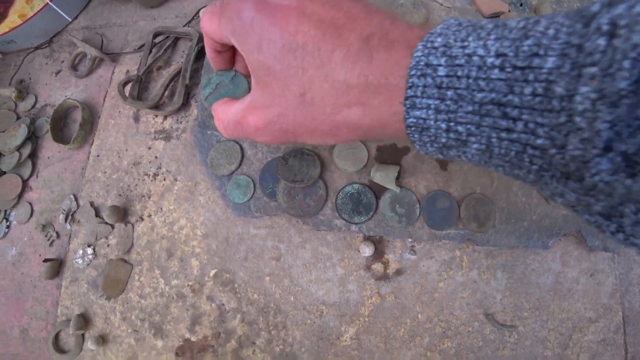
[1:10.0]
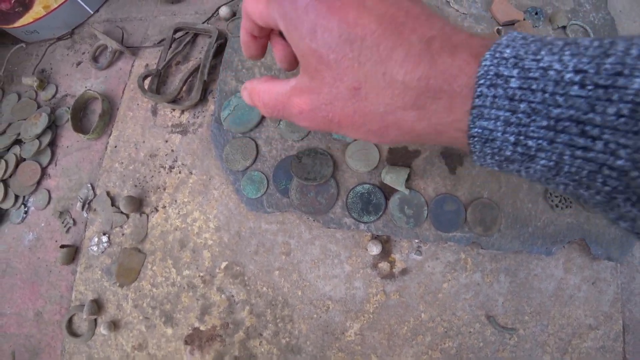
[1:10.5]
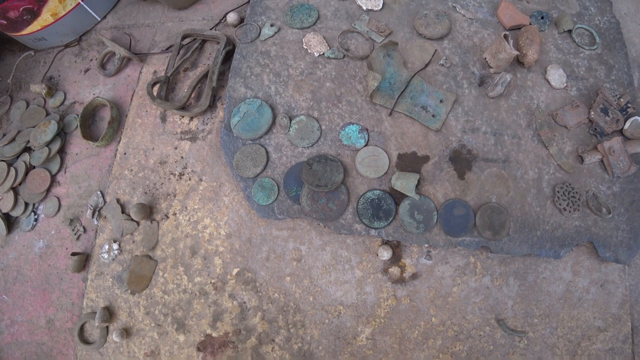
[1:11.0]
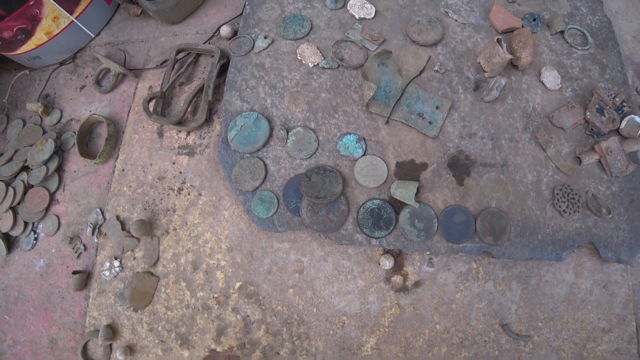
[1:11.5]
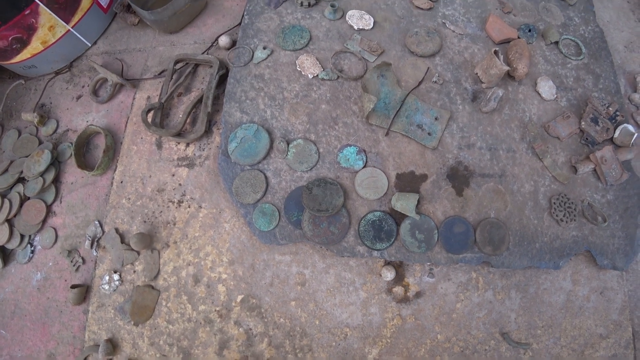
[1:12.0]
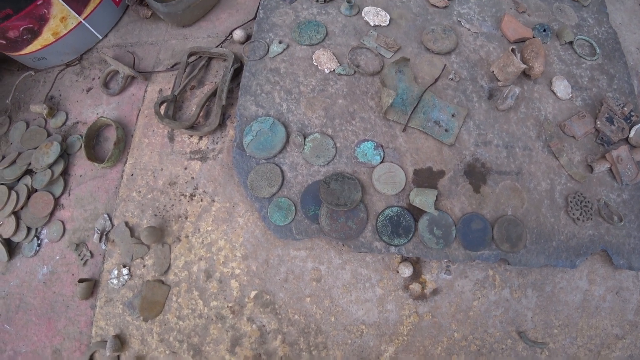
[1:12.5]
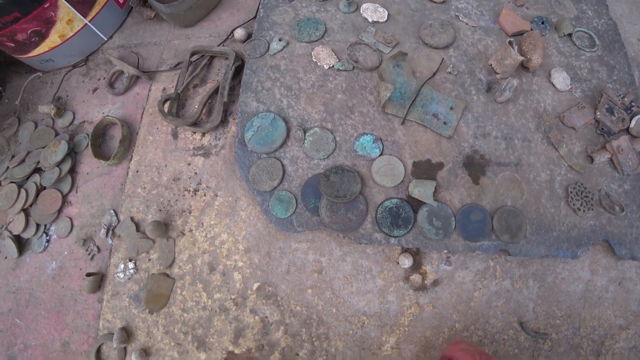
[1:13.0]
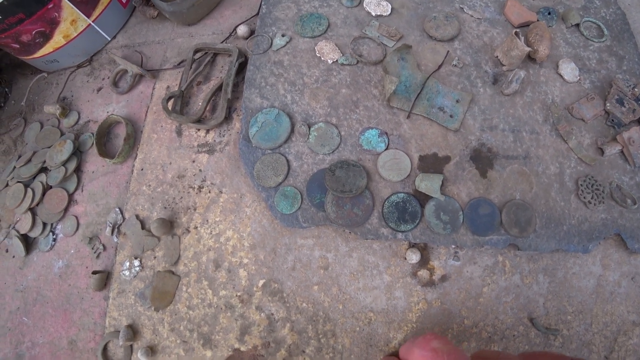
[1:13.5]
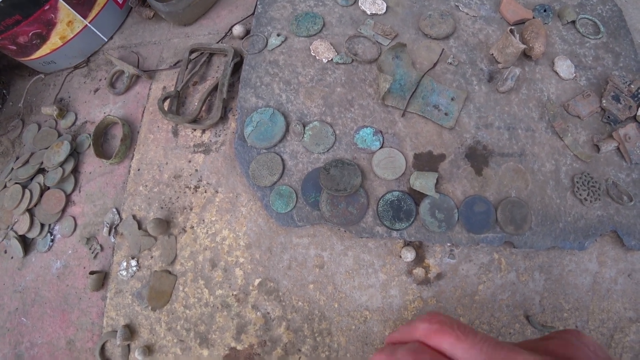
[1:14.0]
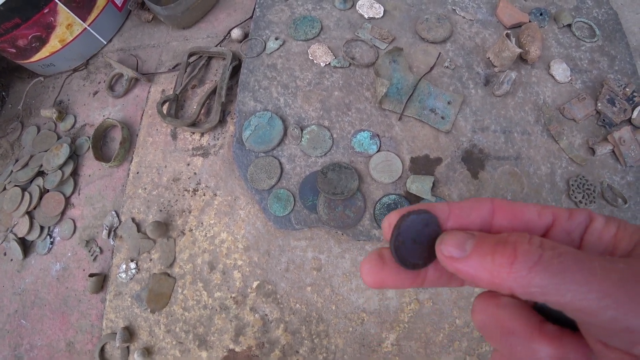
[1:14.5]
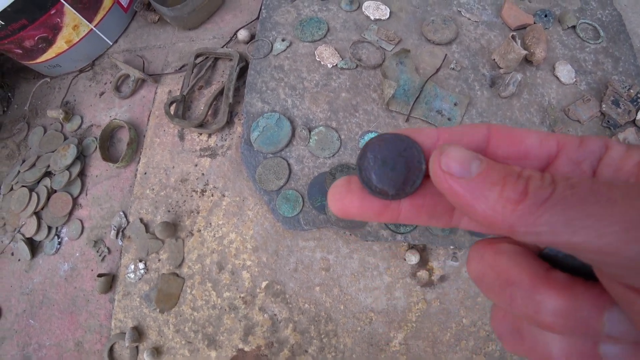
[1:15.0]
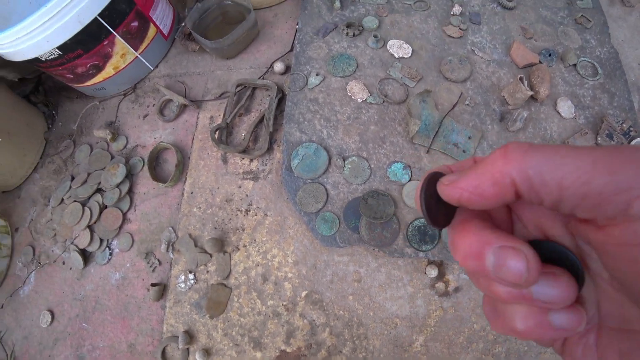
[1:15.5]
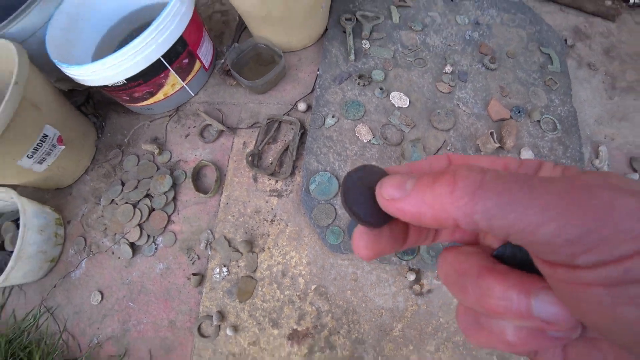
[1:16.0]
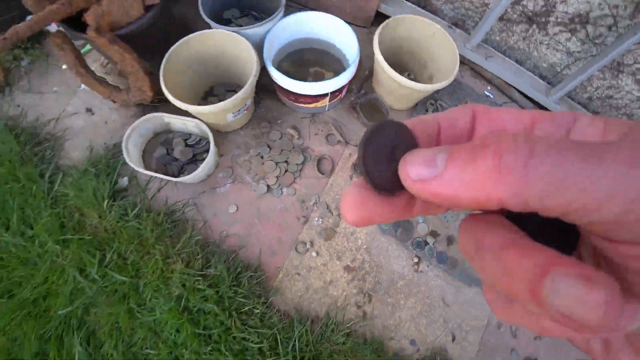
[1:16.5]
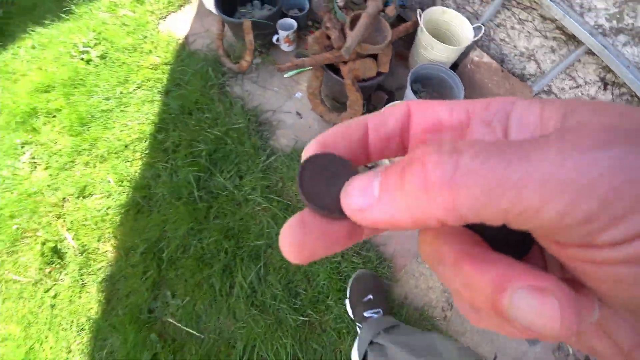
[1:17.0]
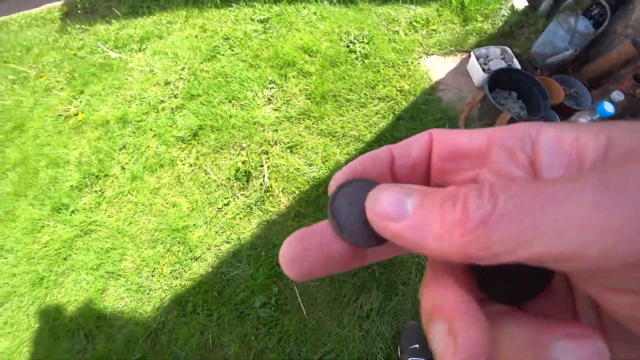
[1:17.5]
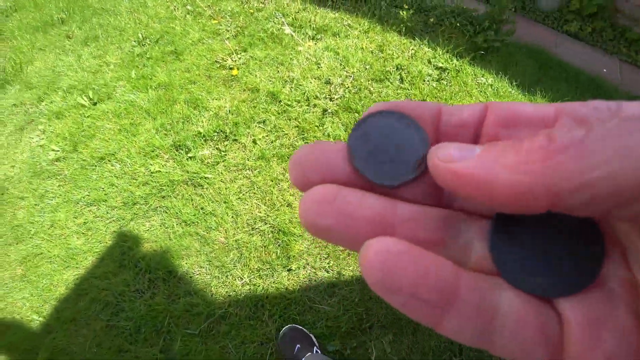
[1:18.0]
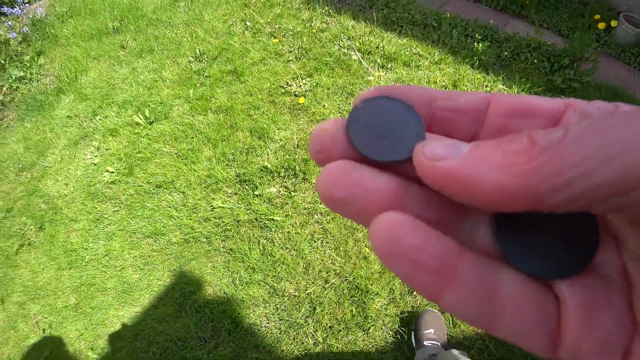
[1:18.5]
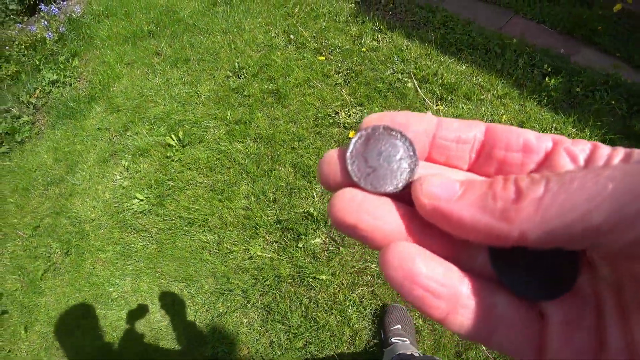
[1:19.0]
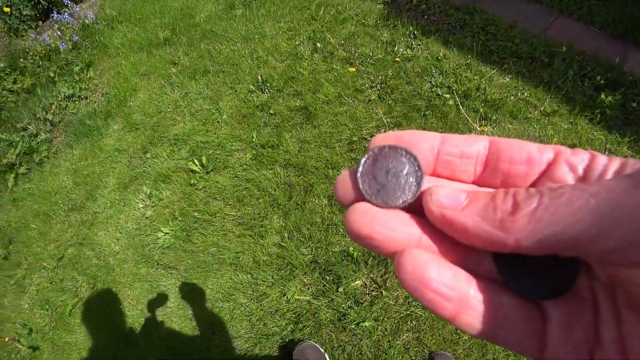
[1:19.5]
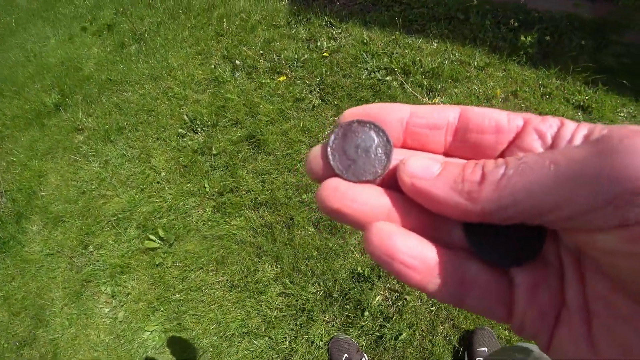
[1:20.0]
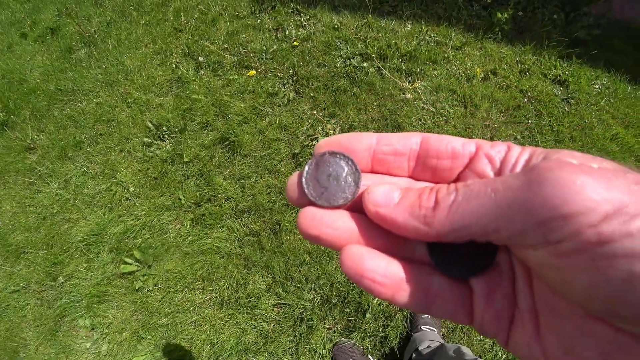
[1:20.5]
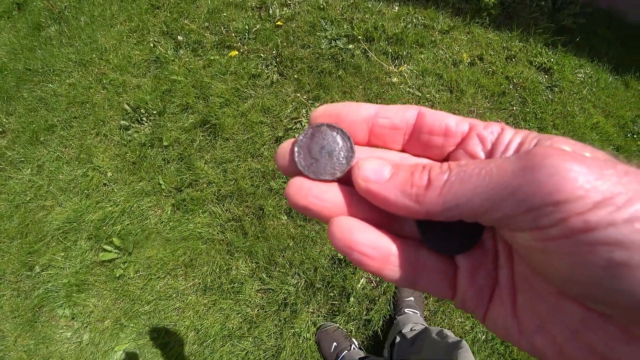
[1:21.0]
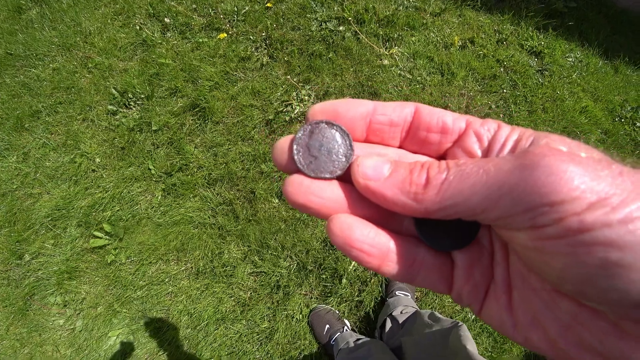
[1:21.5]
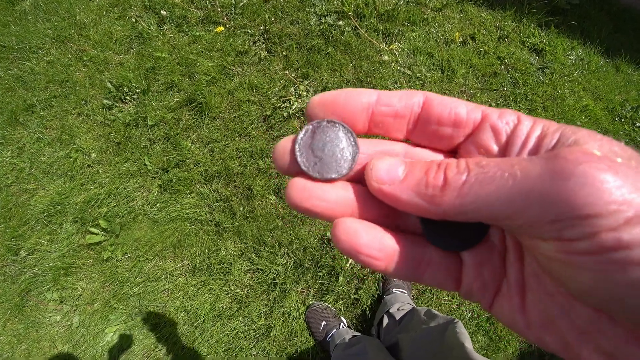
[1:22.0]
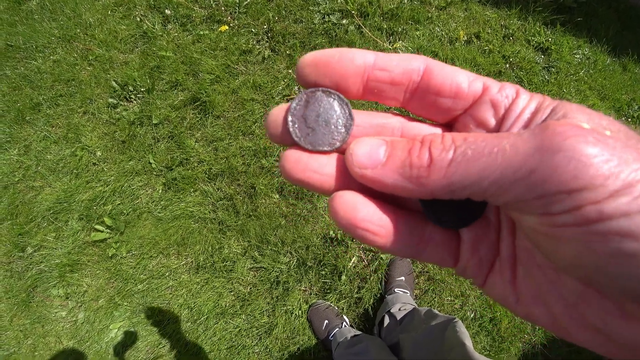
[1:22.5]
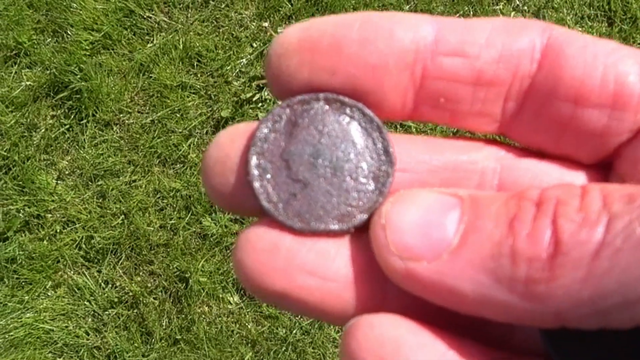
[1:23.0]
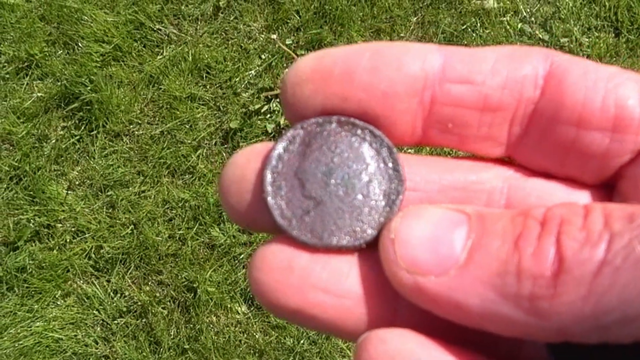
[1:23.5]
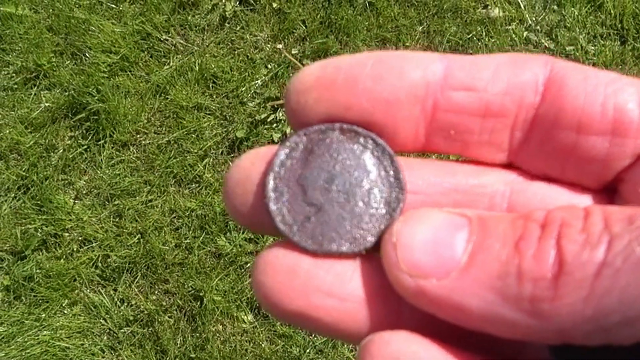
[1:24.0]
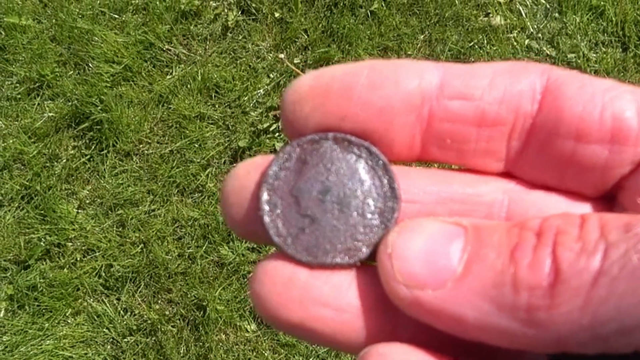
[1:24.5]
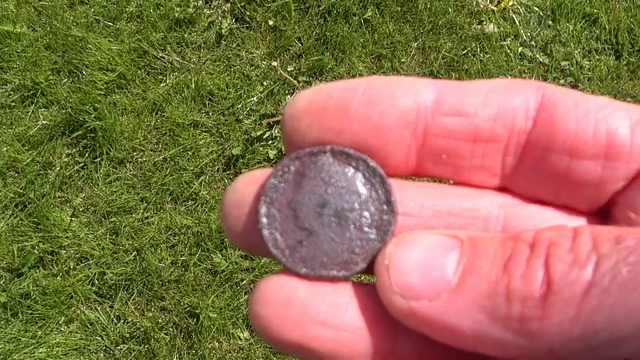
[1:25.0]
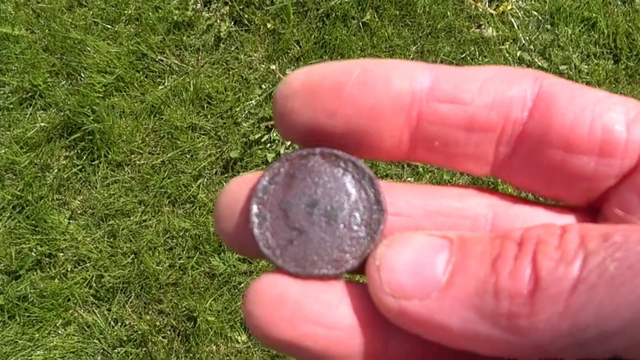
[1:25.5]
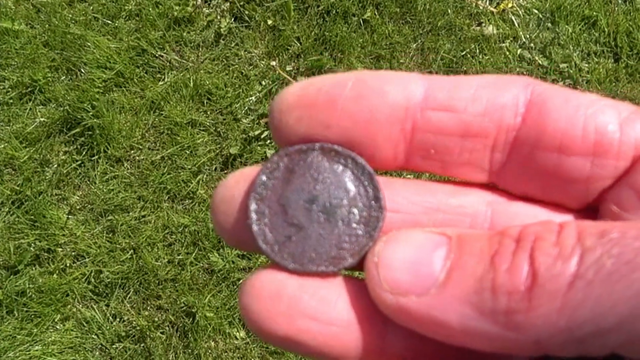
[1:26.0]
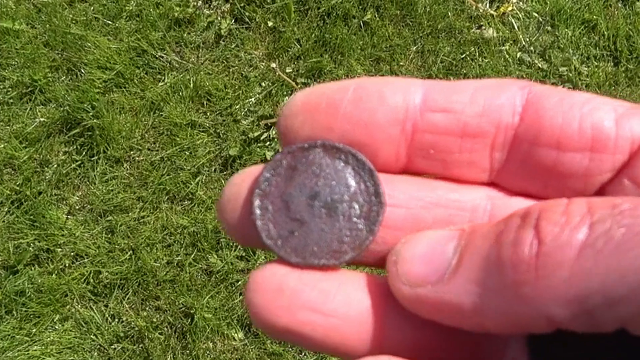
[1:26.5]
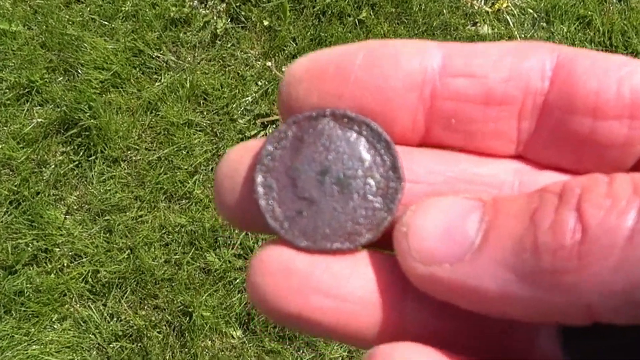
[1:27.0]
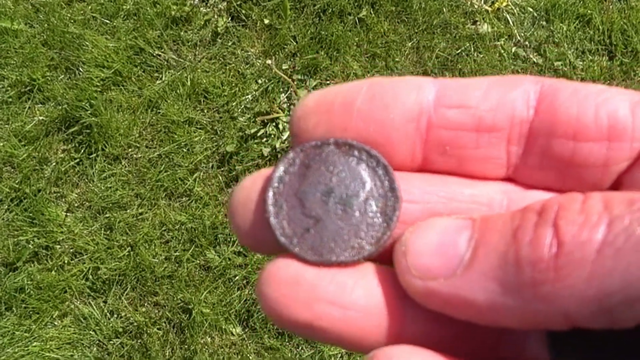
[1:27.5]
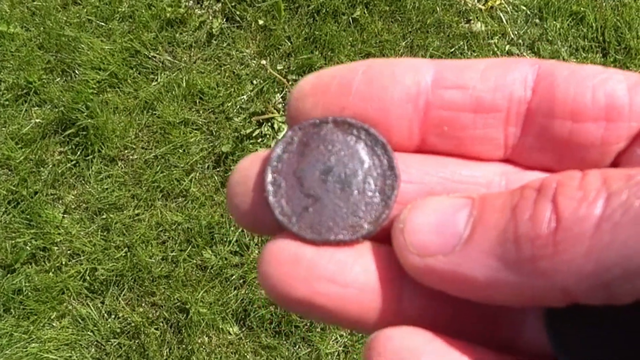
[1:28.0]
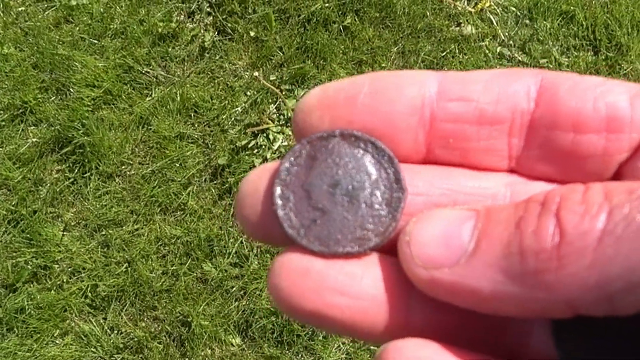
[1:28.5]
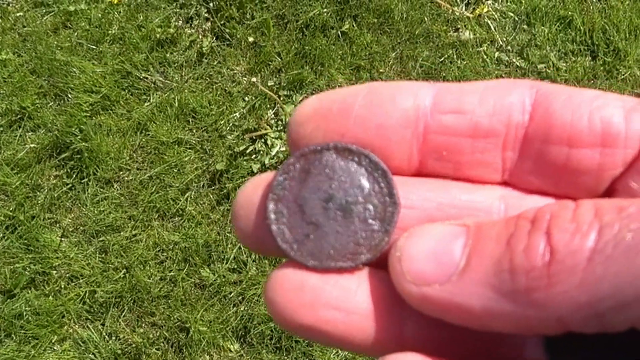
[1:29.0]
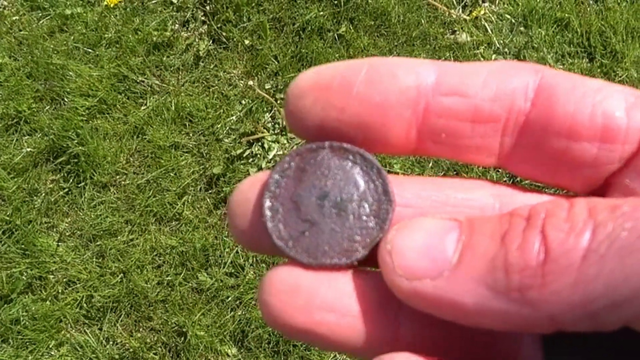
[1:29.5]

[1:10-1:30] He puts down the big verdigris coin he was just showing. The camera hovers, bouncing up and down a little. The hand comes in from the bottom of the frame showing one more coin, which is quite dark. He stands up, and the sun is shining on the grass. He has two coins in his hand and brings one in particular out into the sun to show the camera in more detail. Part of a flower bed is in the background. The face on the coin is seen quite close up, but the camera focuses on the texture of the grass rather than on the coin. He has quite short nails and wears no gloves. The profile on the coin faces the left of the frame; it is possibly the Scottish bawbee. The hand fills most of the right side of the frame, with three fingers and the top of the thumb visible. The grass is quite long, with a few dandelions or daisies in it. This holds until the end of the shot.